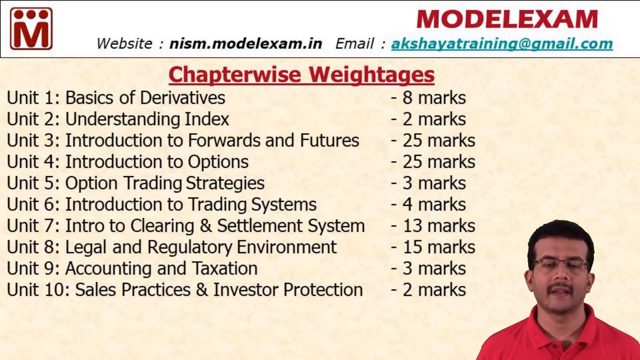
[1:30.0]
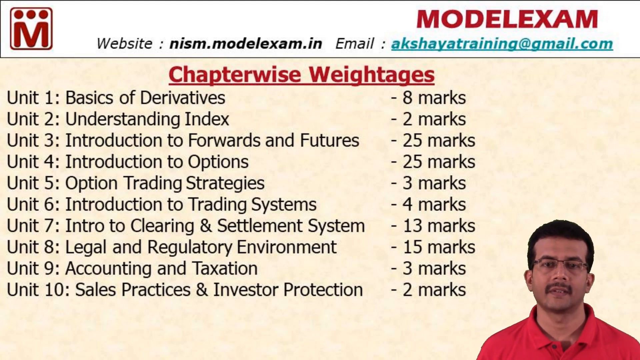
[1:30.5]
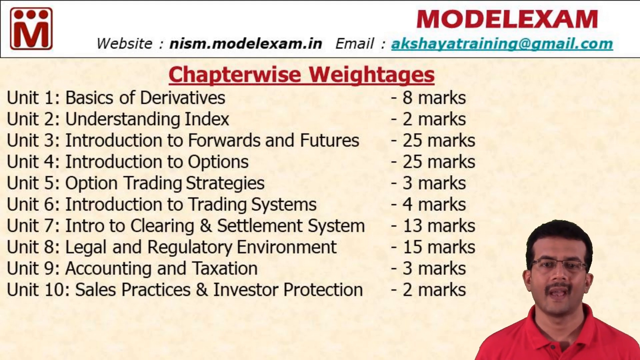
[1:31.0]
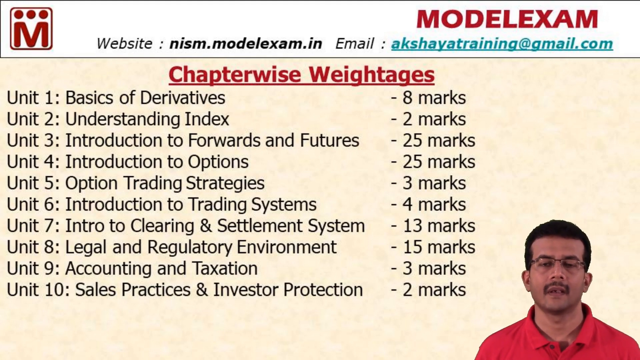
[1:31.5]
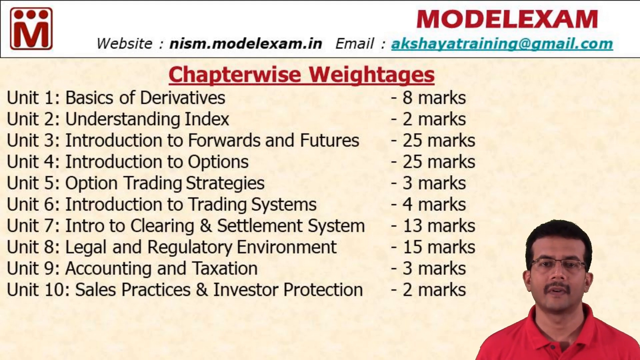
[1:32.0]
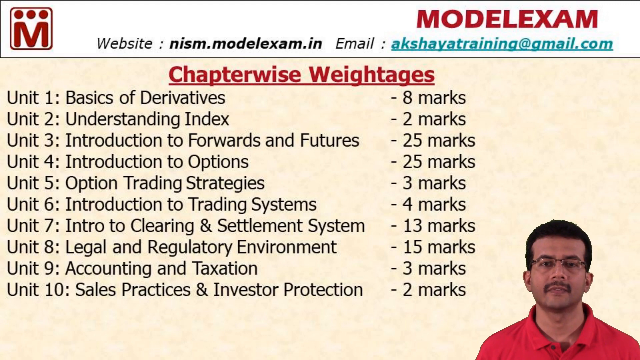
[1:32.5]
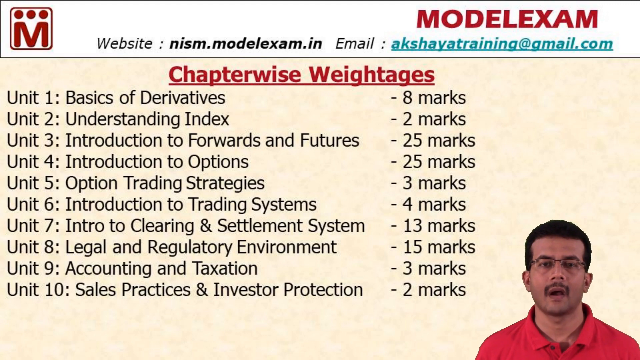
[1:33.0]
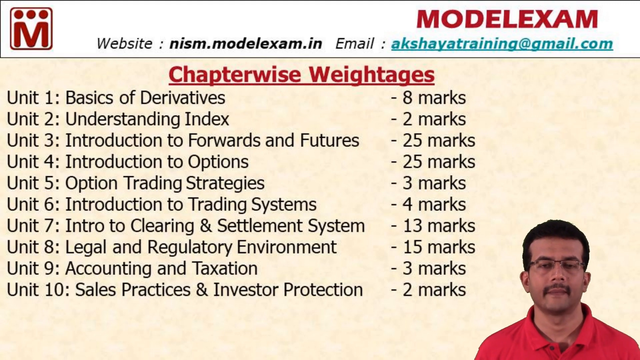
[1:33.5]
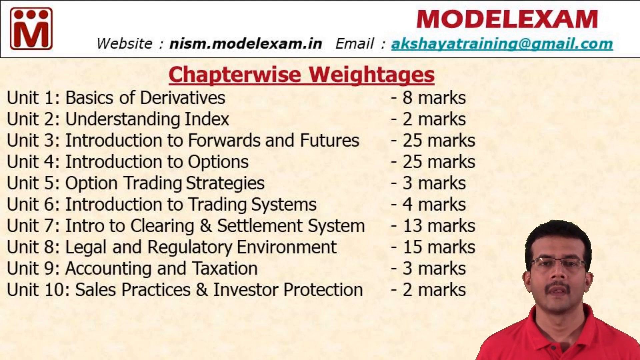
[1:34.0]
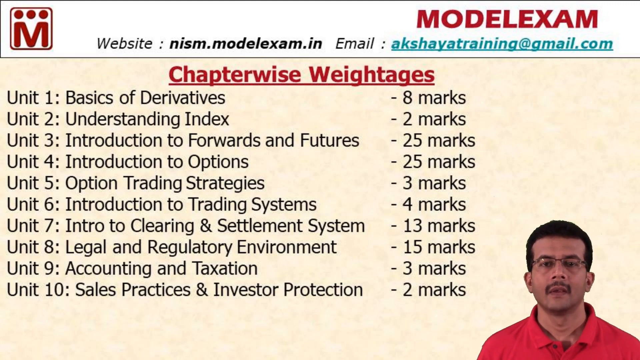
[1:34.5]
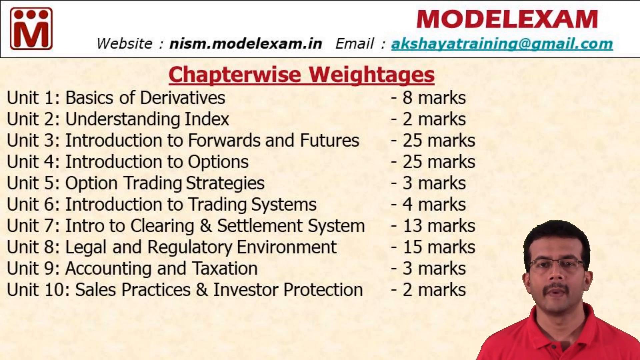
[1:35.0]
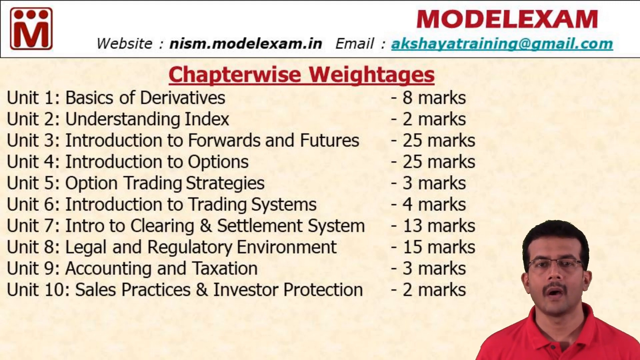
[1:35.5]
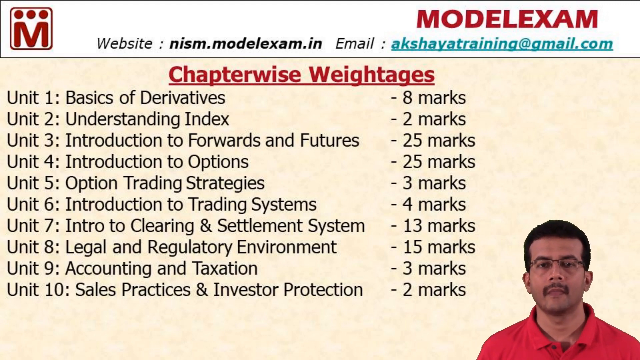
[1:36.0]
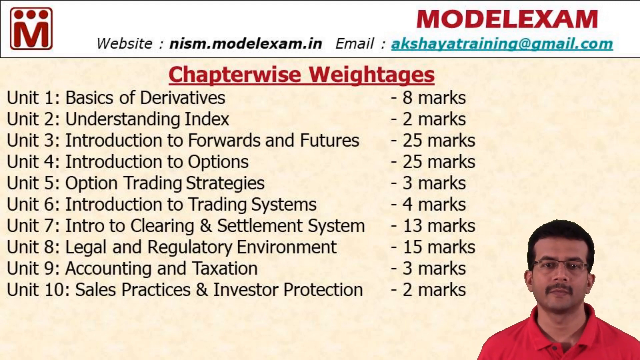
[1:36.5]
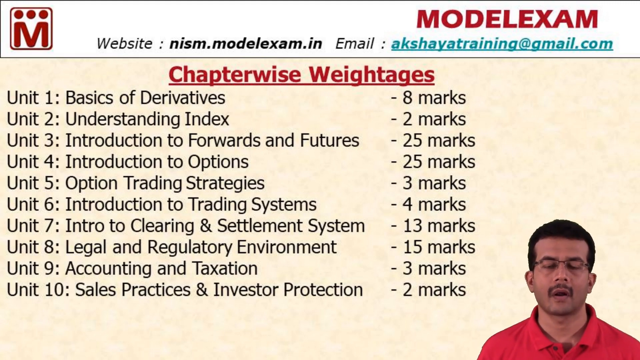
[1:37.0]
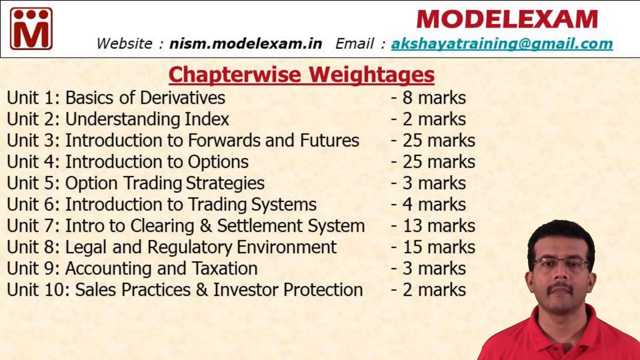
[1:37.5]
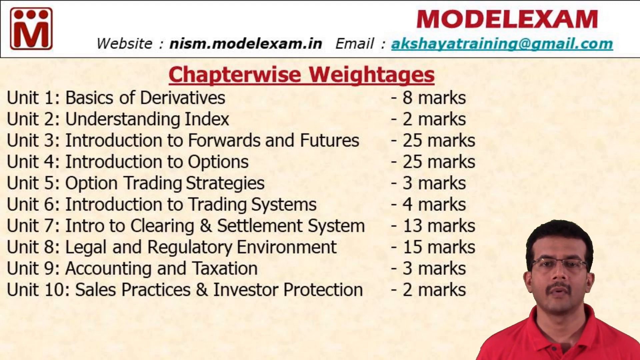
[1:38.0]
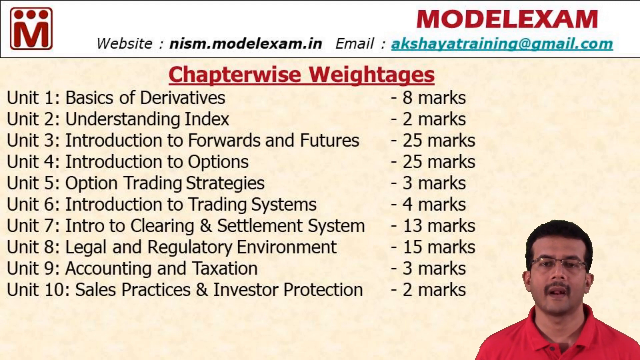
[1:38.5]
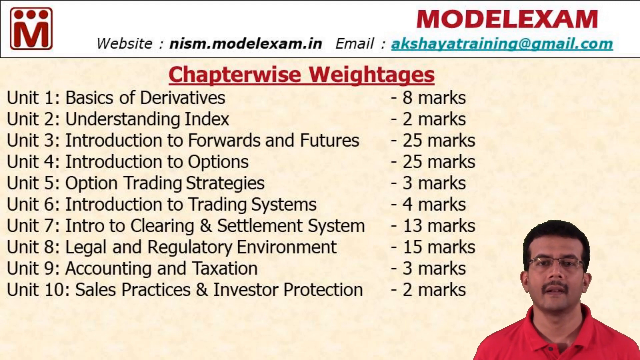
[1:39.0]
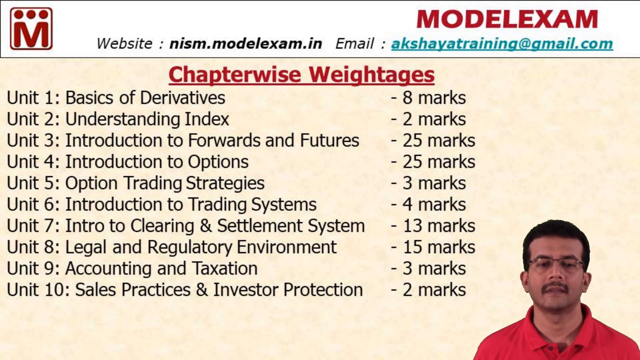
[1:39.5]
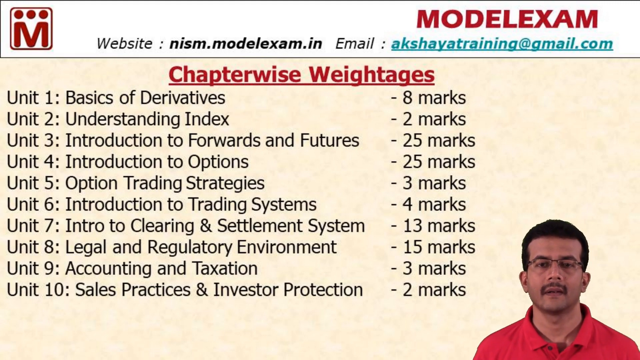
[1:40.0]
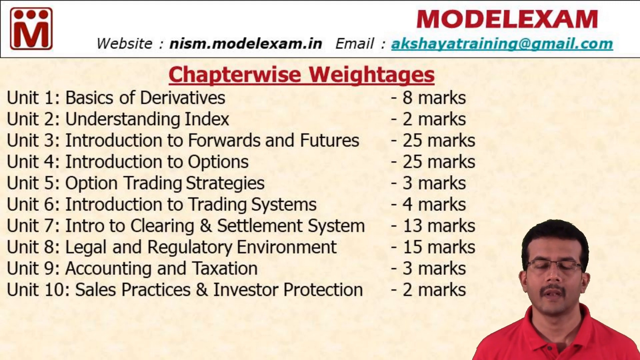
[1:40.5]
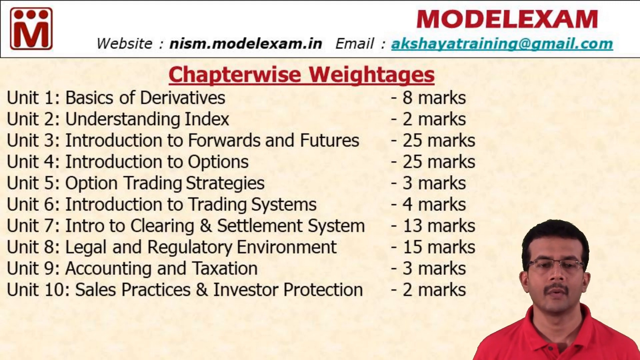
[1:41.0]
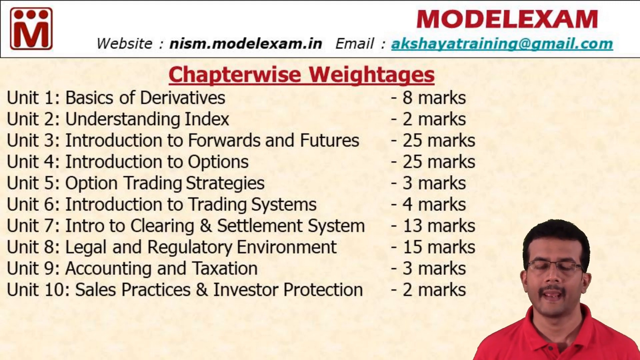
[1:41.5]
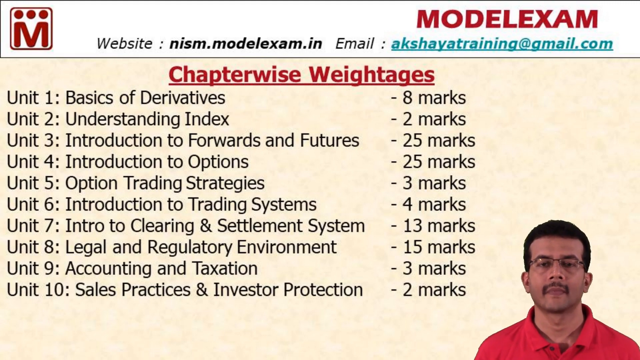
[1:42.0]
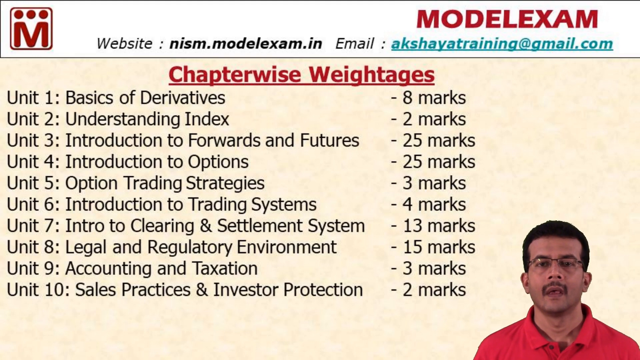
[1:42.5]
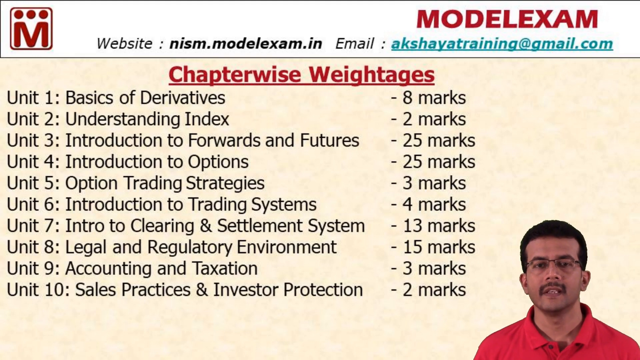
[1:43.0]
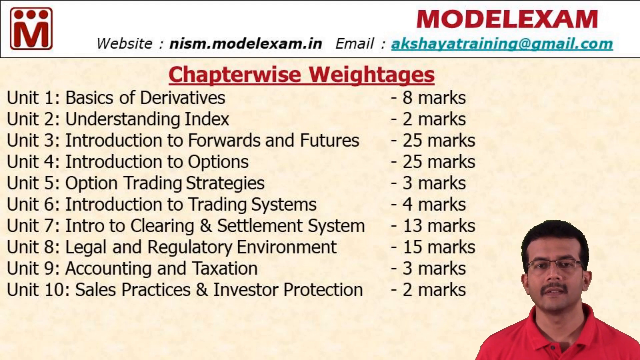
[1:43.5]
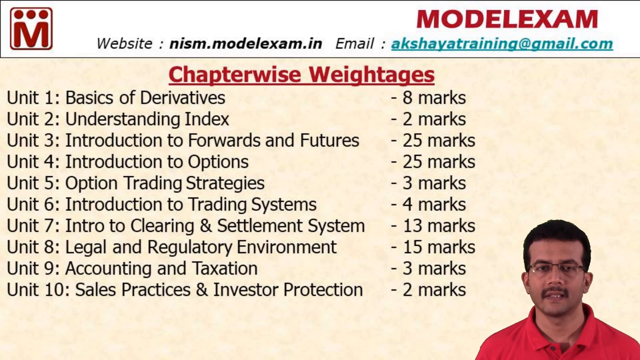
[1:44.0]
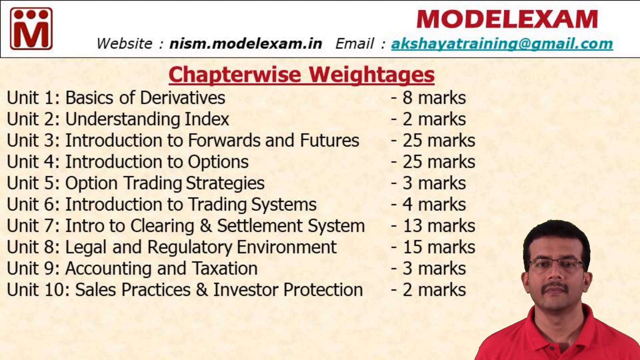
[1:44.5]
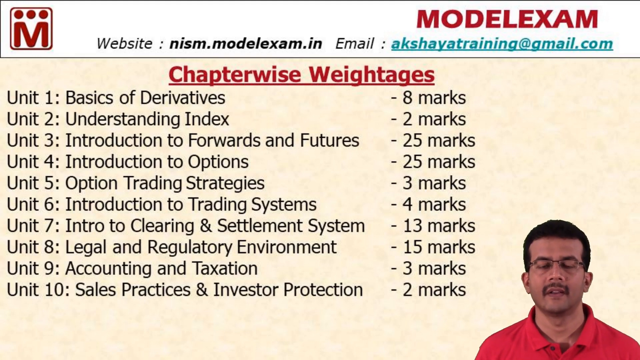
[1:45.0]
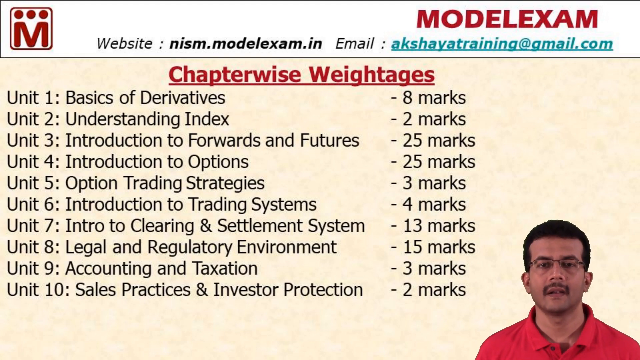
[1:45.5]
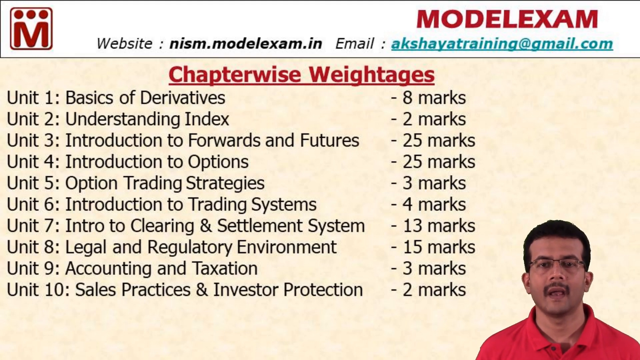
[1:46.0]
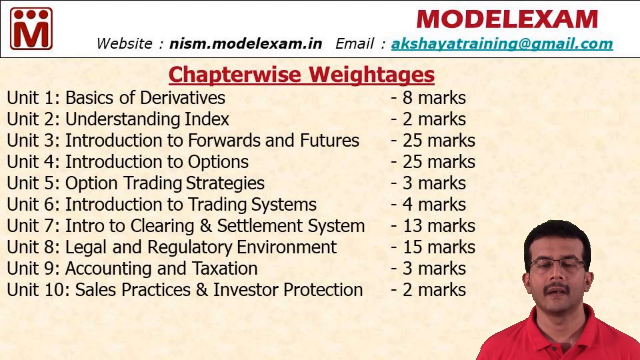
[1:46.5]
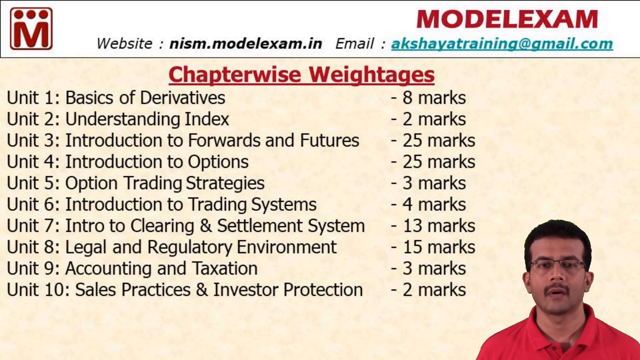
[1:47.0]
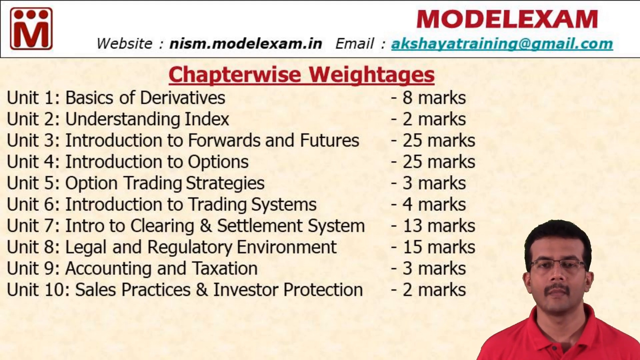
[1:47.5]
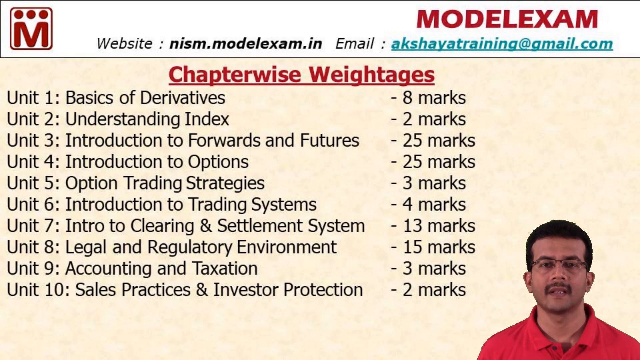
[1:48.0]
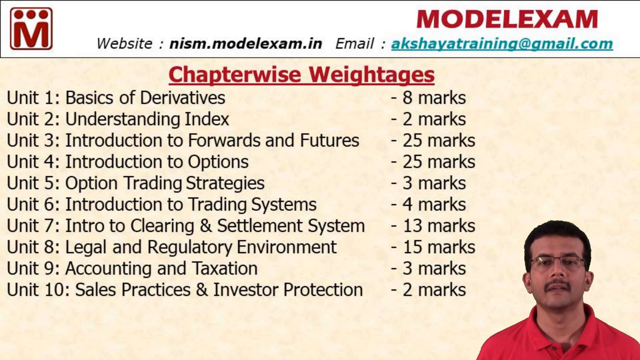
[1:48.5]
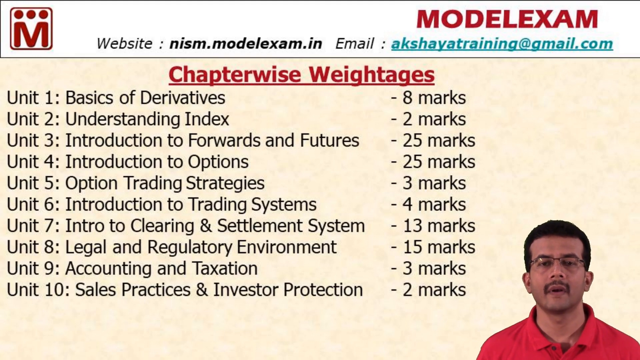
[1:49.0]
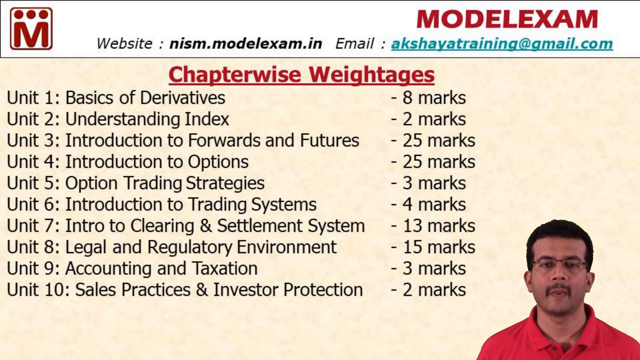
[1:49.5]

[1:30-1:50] The man is in the bottom right corner, visible from the shoulders up. He appears to be wearing a red shirt with the collar folded down neatly; he has black, close-cropped hair, a mustache and rectangular glasses. He speaks at the camera but appears to look down slightly, as if reading off something in front of him, then quickly moves his gaze back up toward the camera. The background text remains unchanged: a slide listing the units and the number of marks for each, including "Unit 6, Introduction to Trading Systems, 4 marks", "Unit 7, Intro to Clearing and Settlement Systems, 13 marks", "Unit 8, Legal and Regulatory Environment, 15 marks", "Unit 9, Accounting and Taxation, 3 marks" and "Unit 10, Sales, Practices, and Investor Protection".